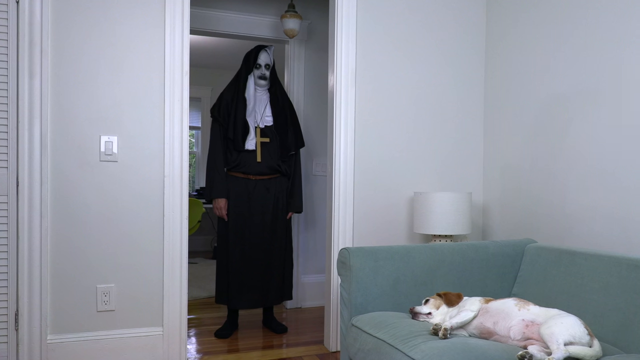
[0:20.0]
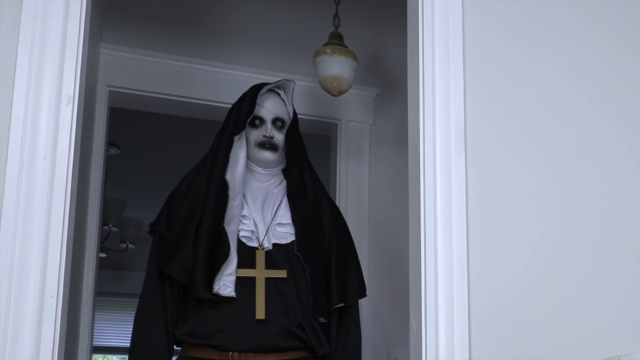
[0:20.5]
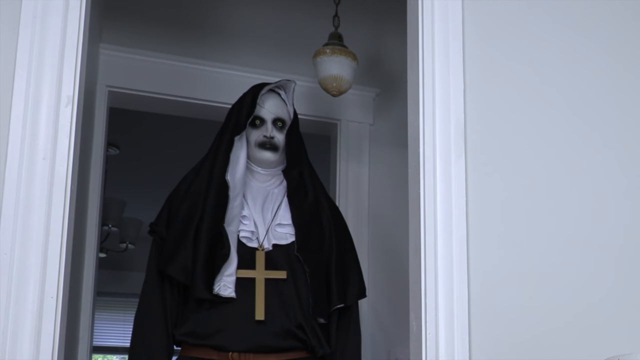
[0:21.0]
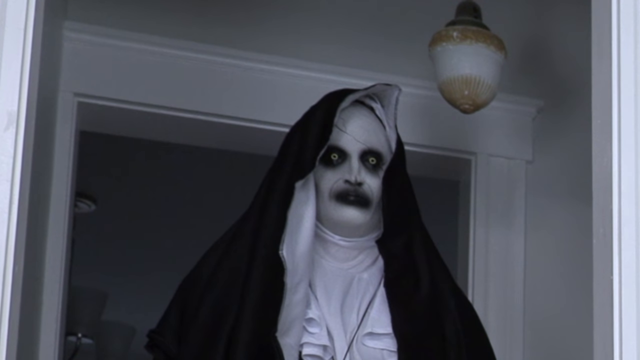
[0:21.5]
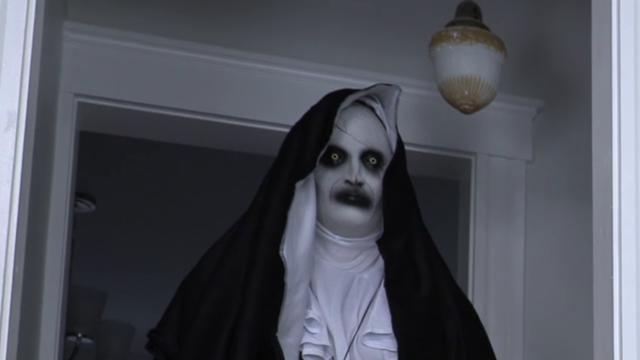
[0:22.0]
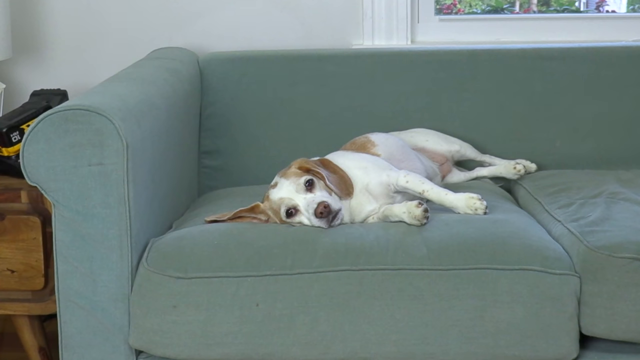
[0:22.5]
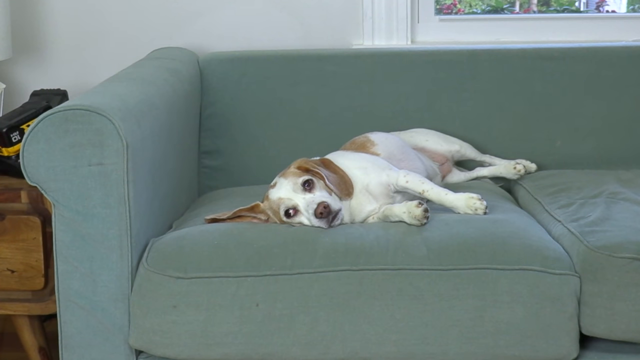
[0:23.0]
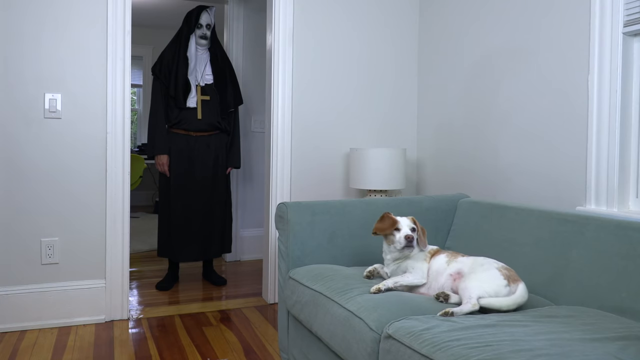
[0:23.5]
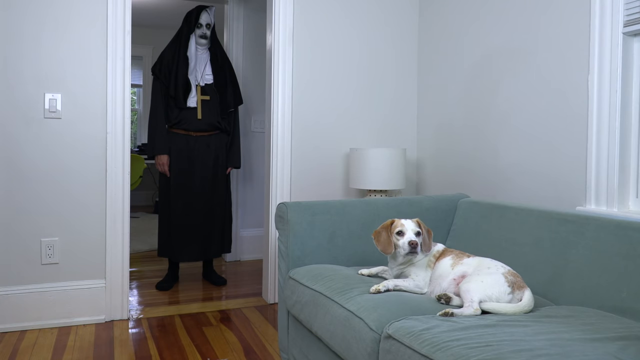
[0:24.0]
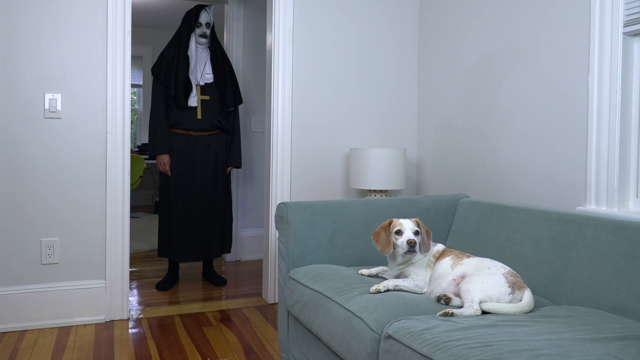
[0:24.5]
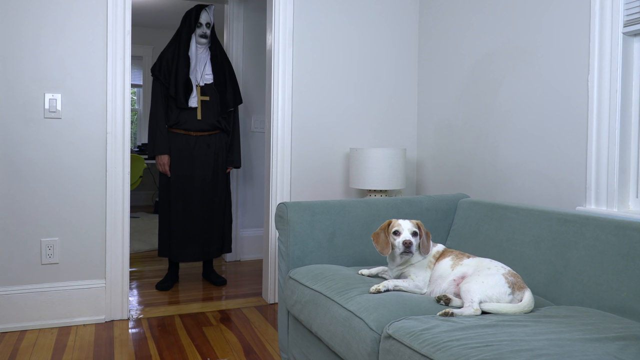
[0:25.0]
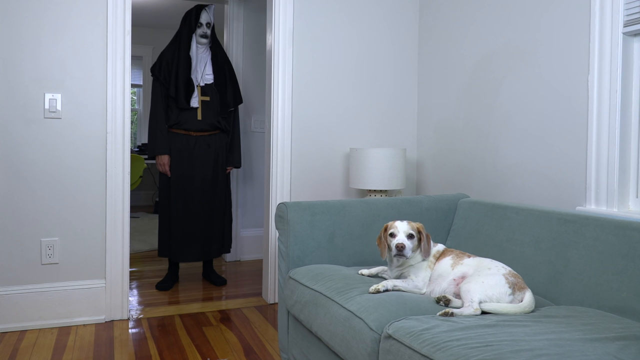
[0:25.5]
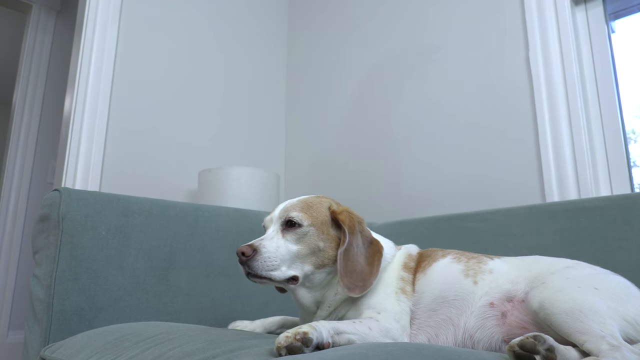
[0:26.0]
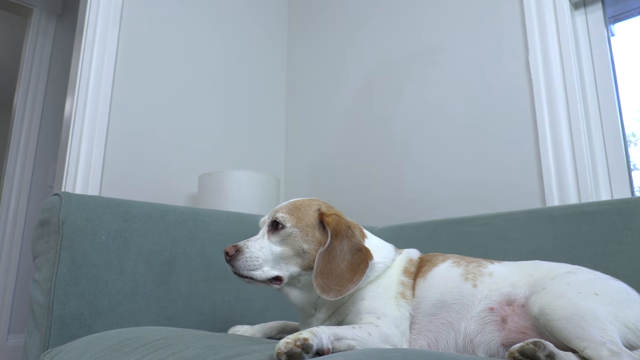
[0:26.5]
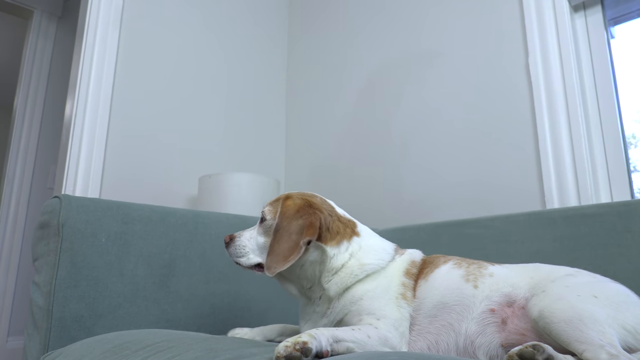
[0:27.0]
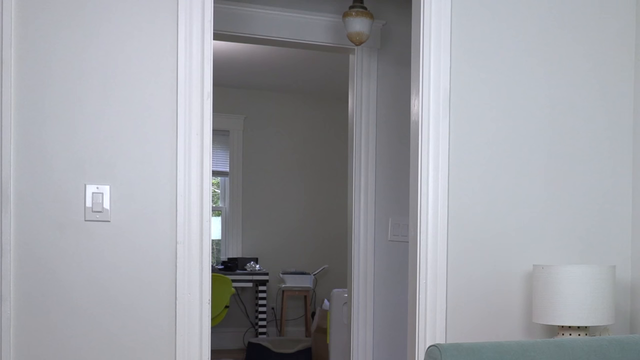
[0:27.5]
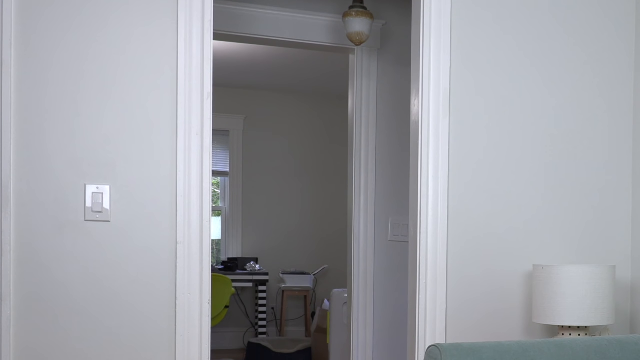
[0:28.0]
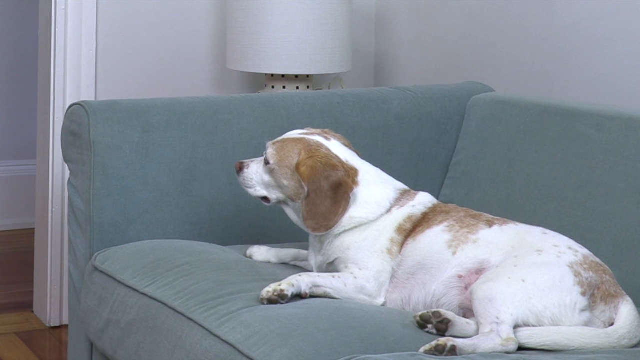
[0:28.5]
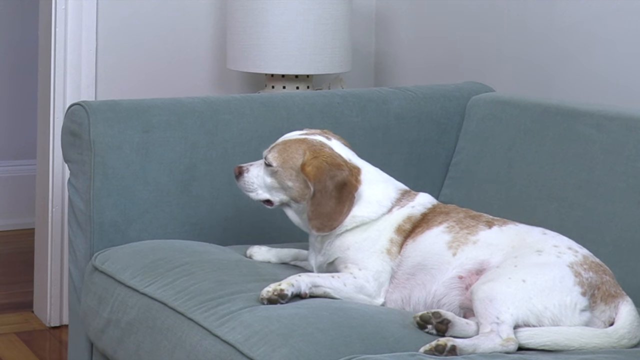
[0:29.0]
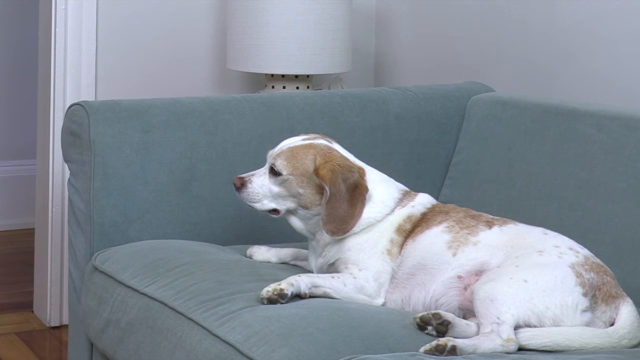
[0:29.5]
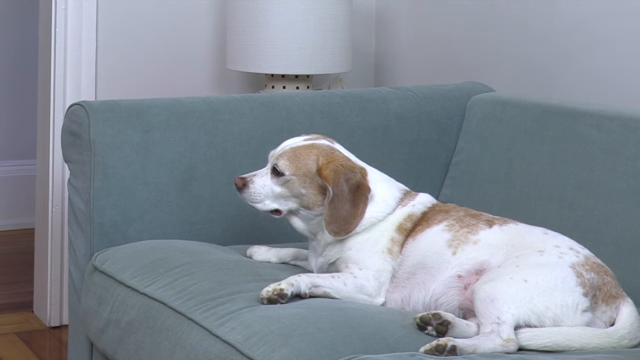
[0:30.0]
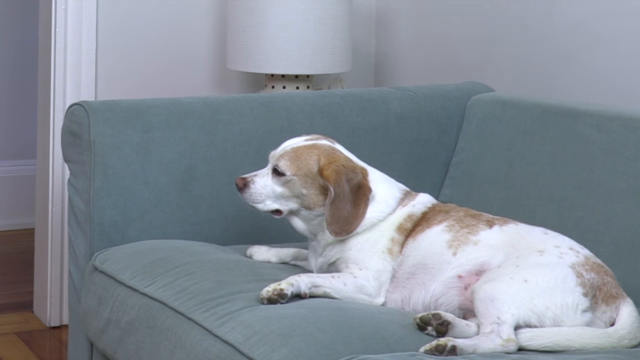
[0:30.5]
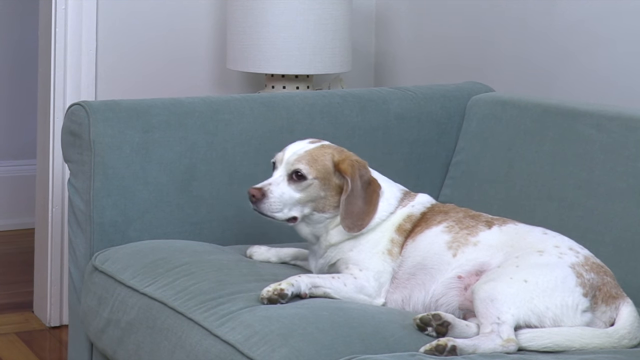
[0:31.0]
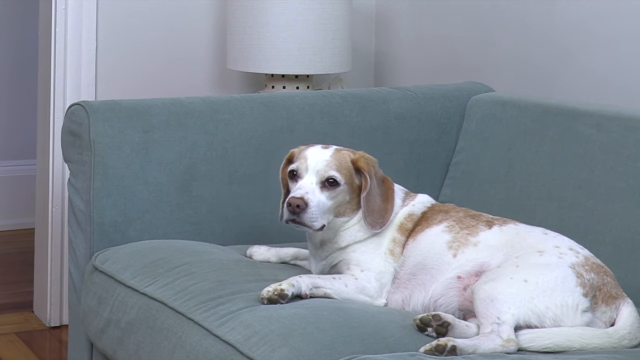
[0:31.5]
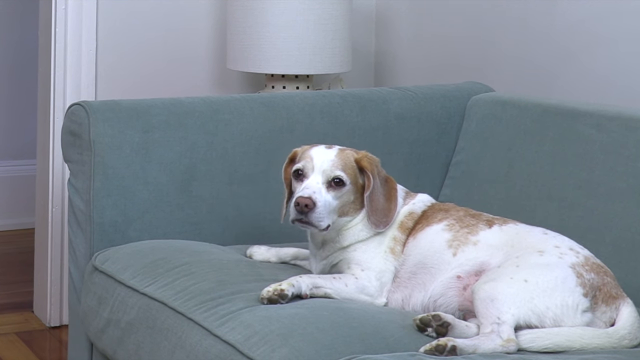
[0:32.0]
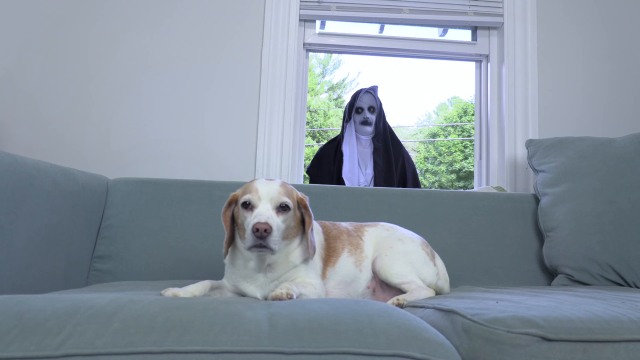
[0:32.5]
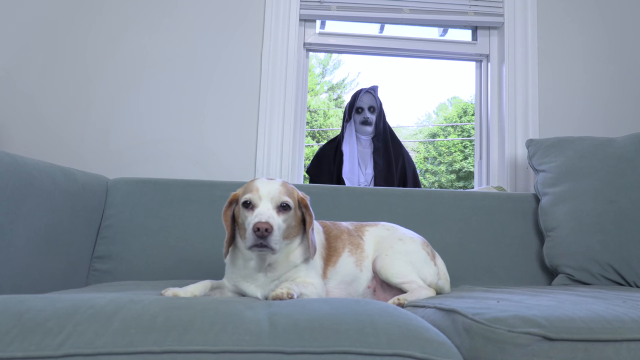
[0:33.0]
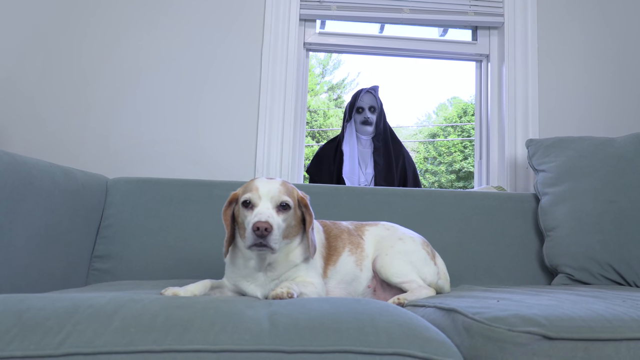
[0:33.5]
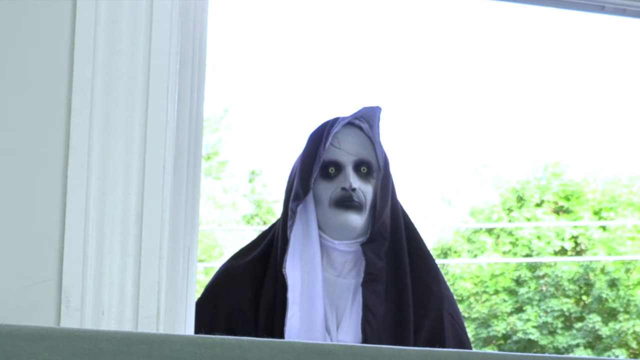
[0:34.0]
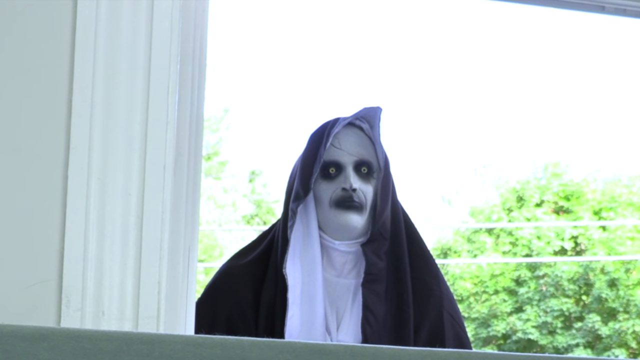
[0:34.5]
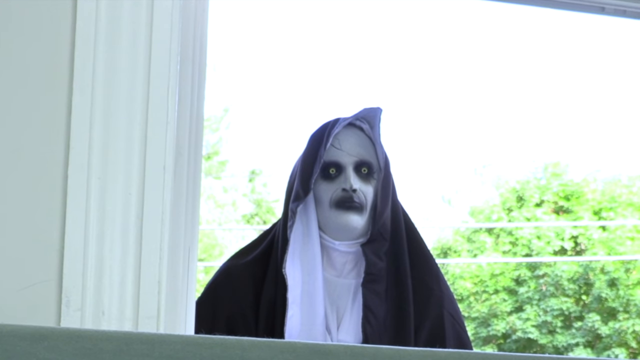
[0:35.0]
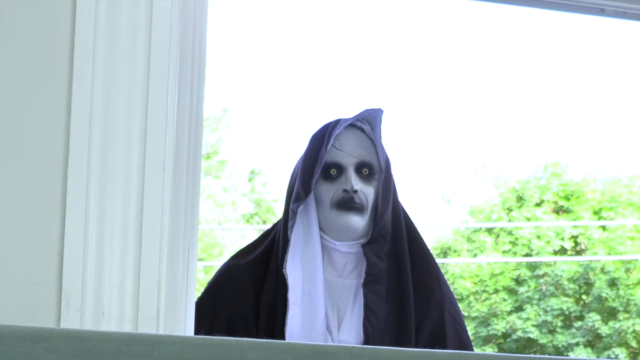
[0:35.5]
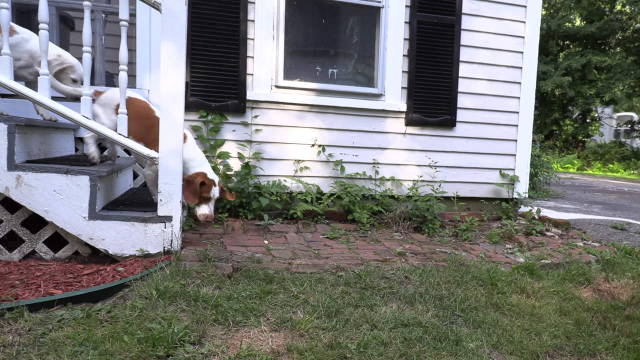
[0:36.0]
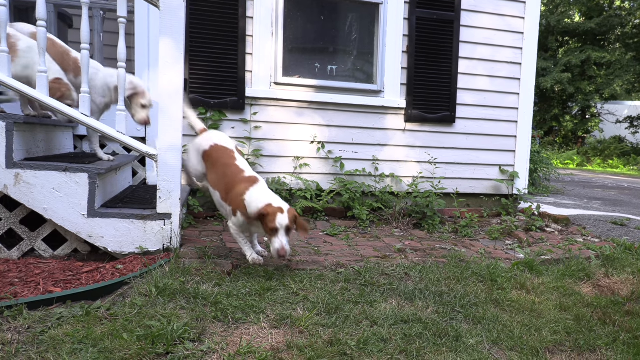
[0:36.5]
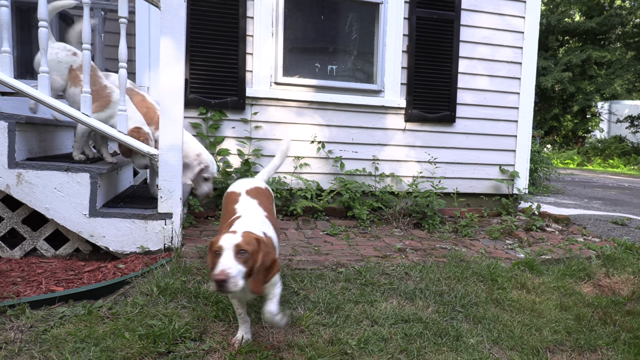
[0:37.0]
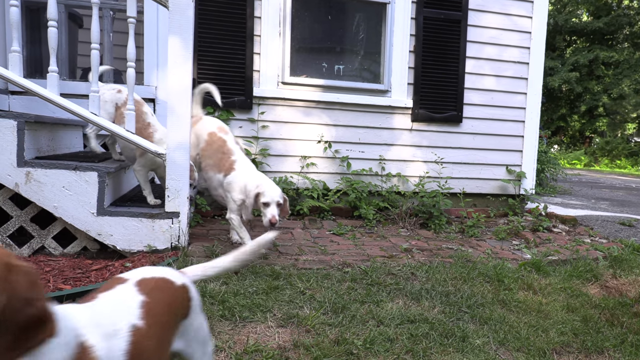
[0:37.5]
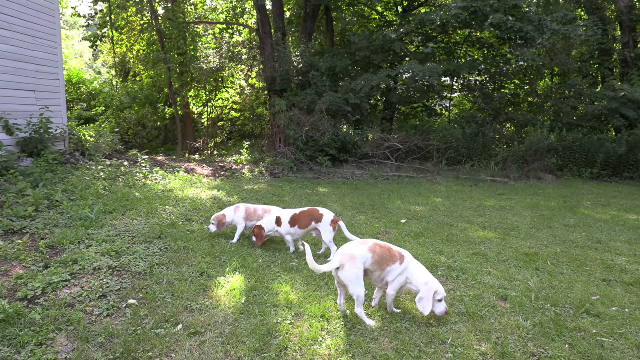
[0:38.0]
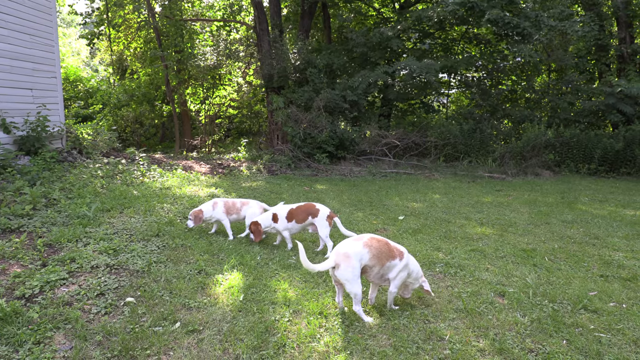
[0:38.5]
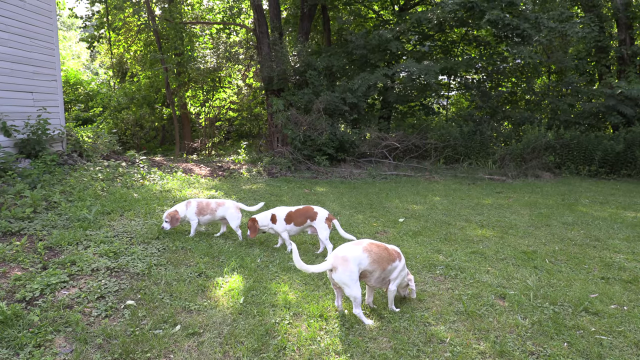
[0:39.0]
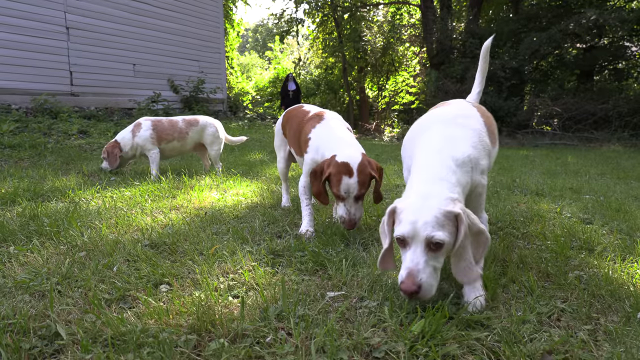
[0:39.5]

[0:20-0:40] While the dog with brown ears rests on the green couch, the person in the creepy costume appears again. The dog jolts up and looks up, but looks away from the demon nun in the doorway. The dog then slowly looks toward the doorway, but the demon nun disappears, leaving the doorway empty and the dog confused. The shot changes to show the demon nun behind the dog through the window. The dog then goes outside and down the stairs with two other dogs, and they eat and sniff the grass. A story is being told of the demon nun seeming to be there but disappearing every time the dog tries to look.